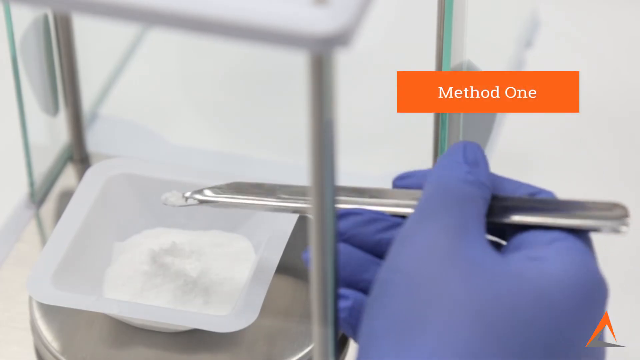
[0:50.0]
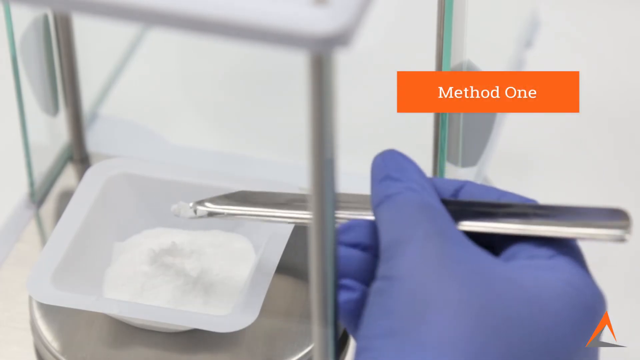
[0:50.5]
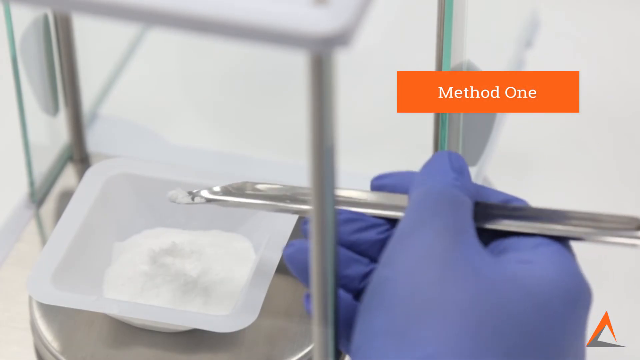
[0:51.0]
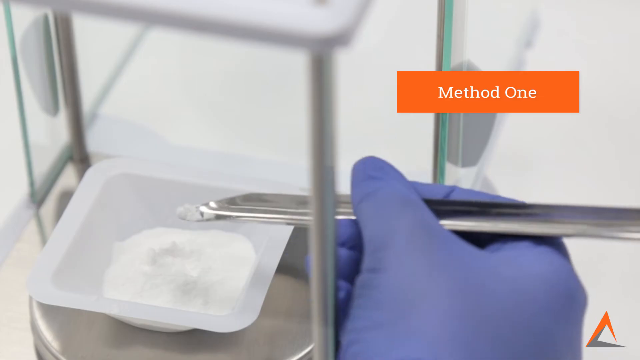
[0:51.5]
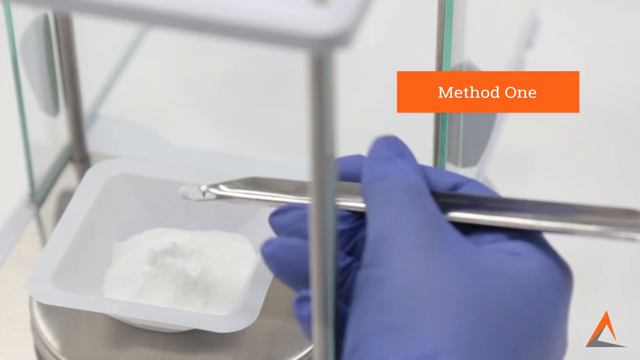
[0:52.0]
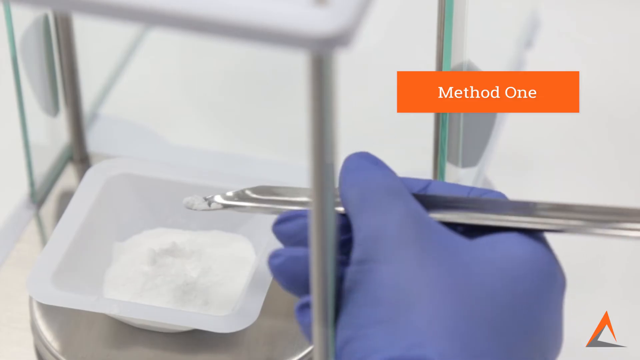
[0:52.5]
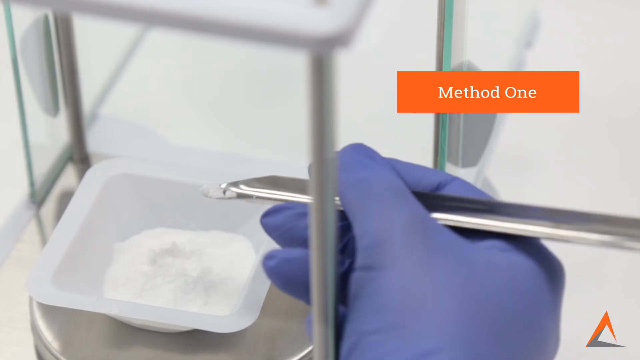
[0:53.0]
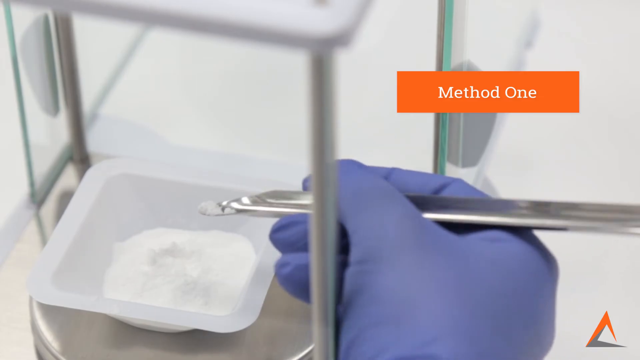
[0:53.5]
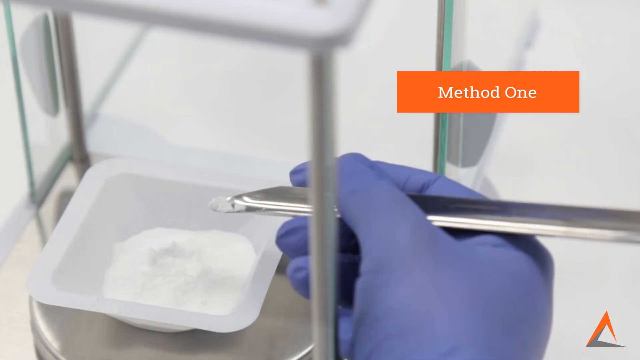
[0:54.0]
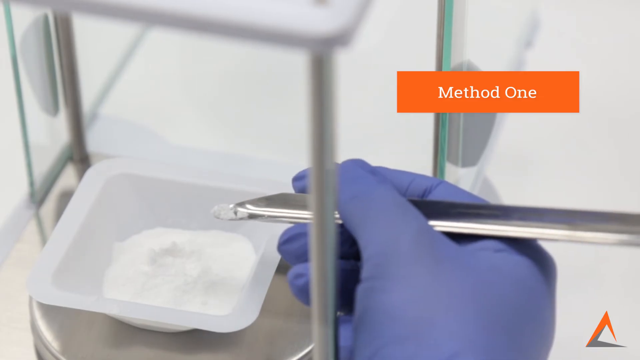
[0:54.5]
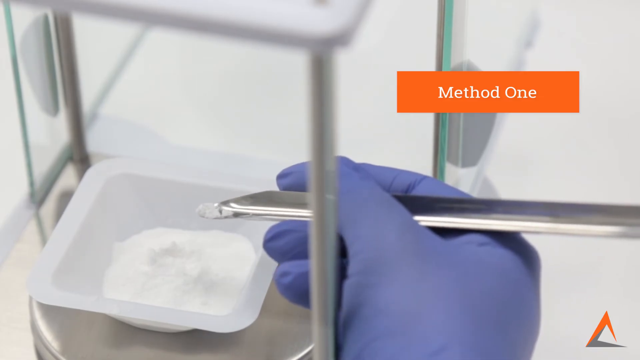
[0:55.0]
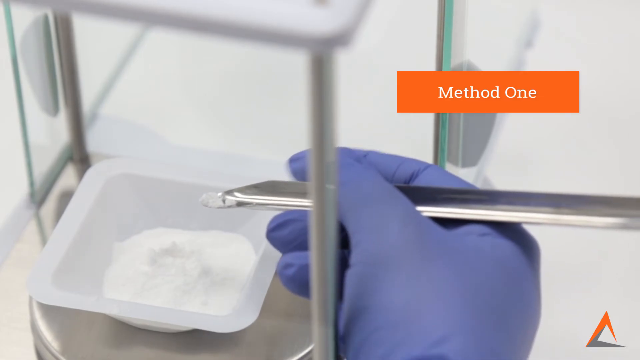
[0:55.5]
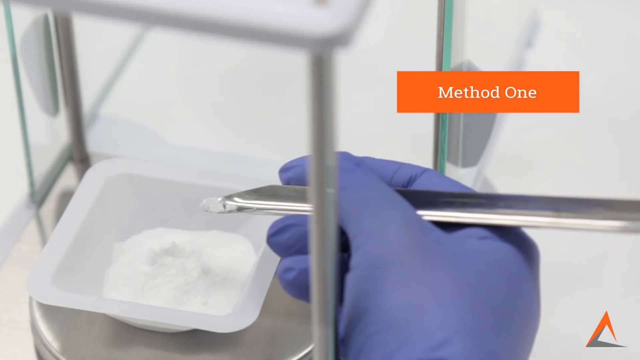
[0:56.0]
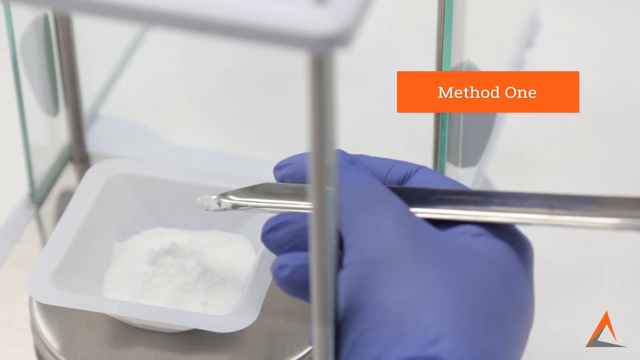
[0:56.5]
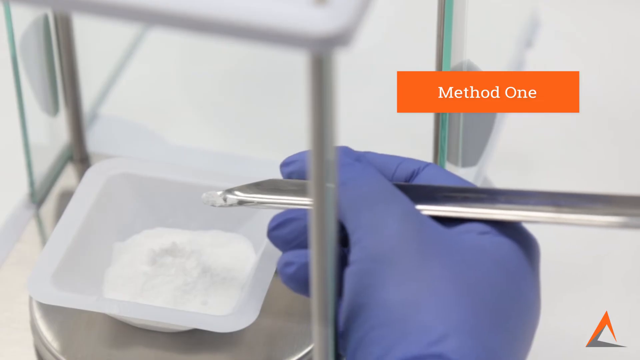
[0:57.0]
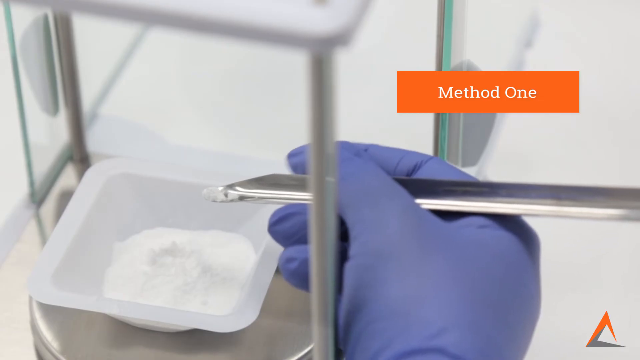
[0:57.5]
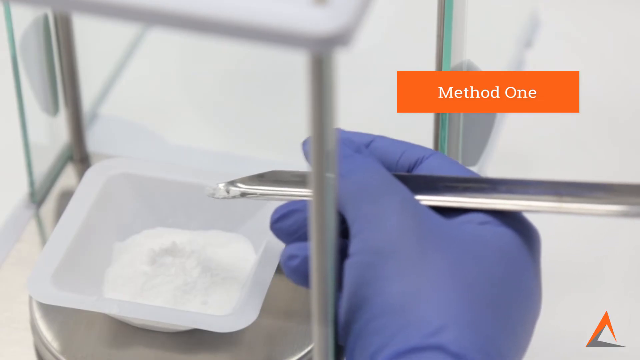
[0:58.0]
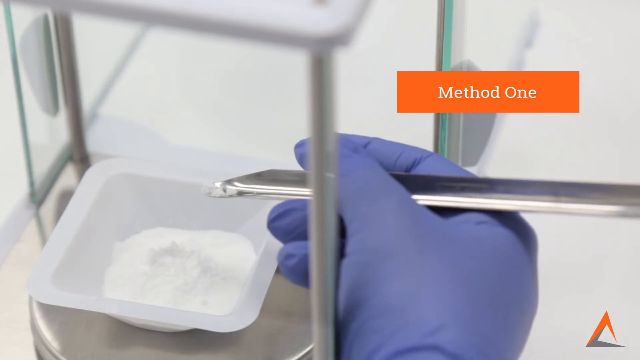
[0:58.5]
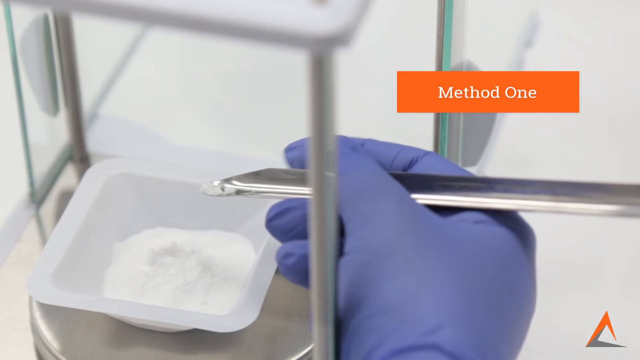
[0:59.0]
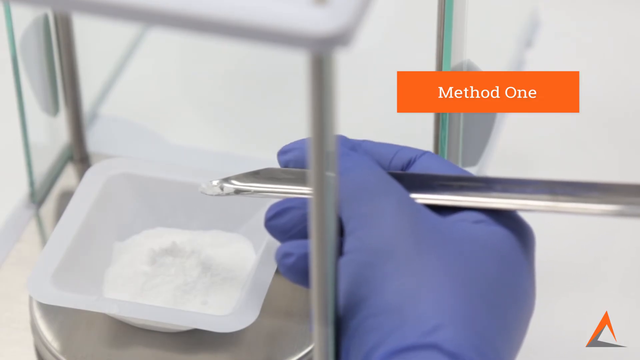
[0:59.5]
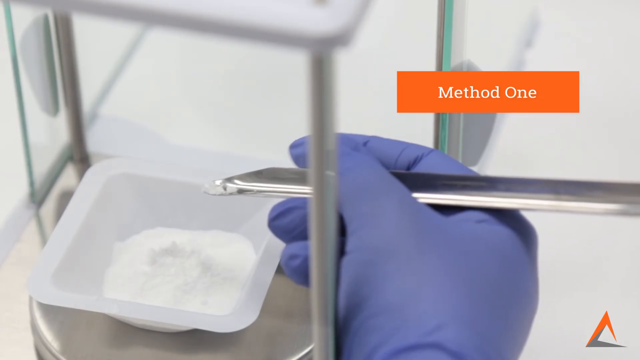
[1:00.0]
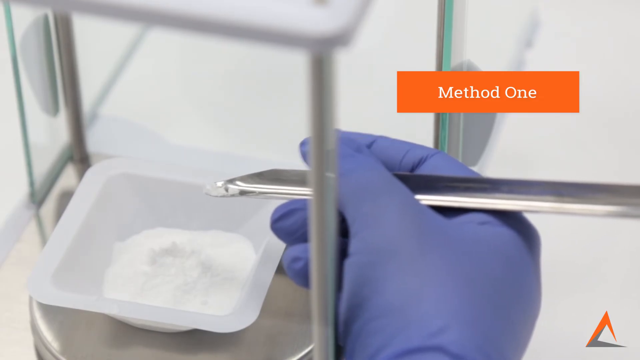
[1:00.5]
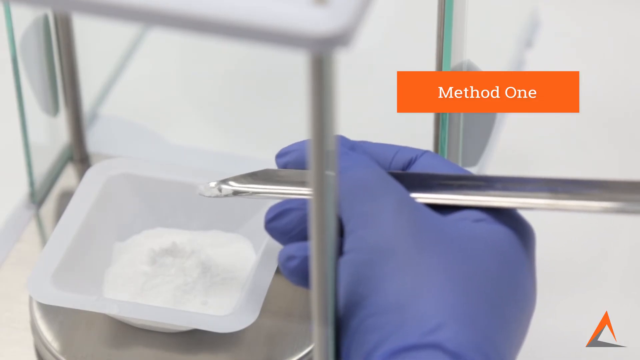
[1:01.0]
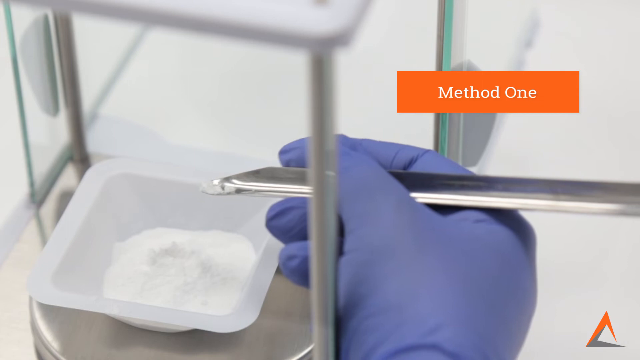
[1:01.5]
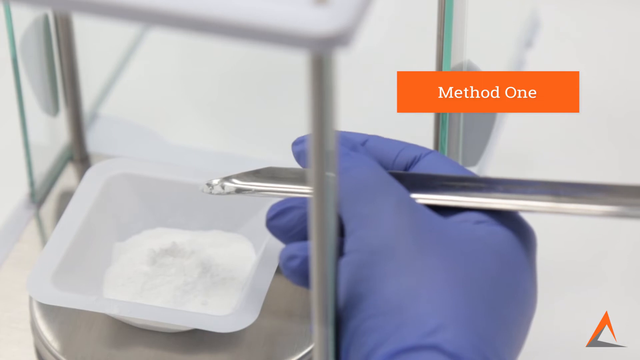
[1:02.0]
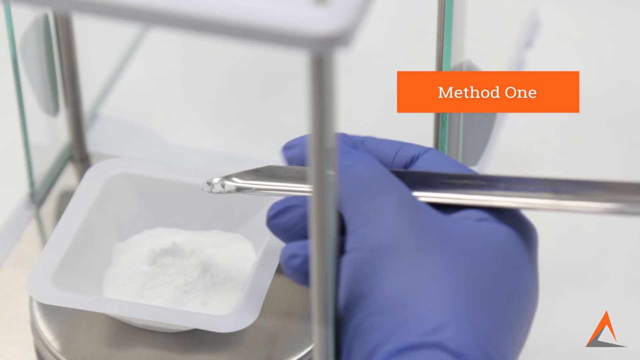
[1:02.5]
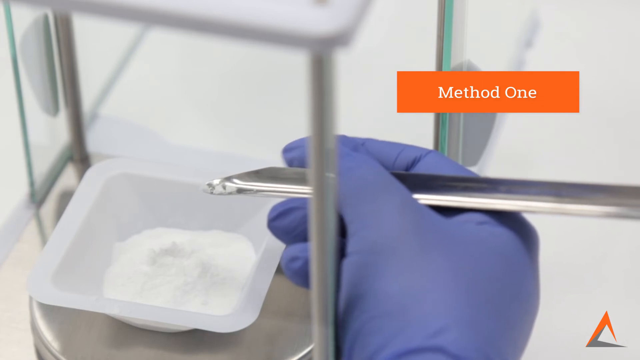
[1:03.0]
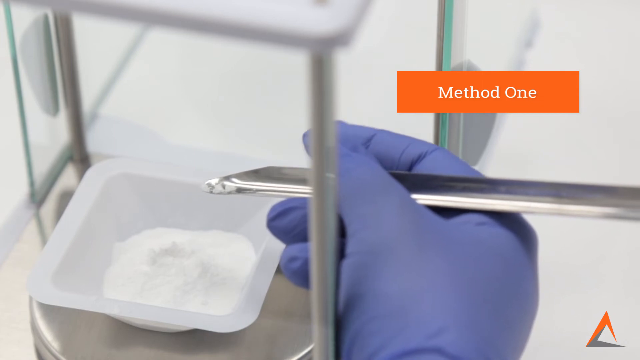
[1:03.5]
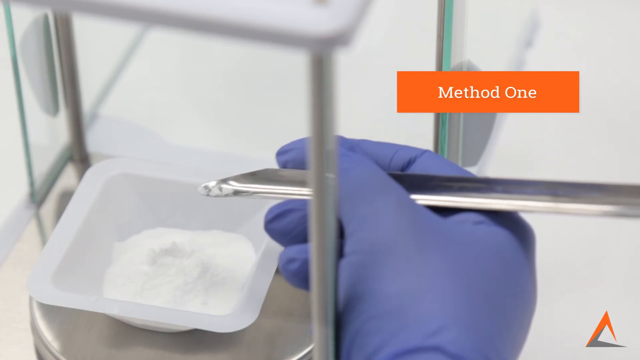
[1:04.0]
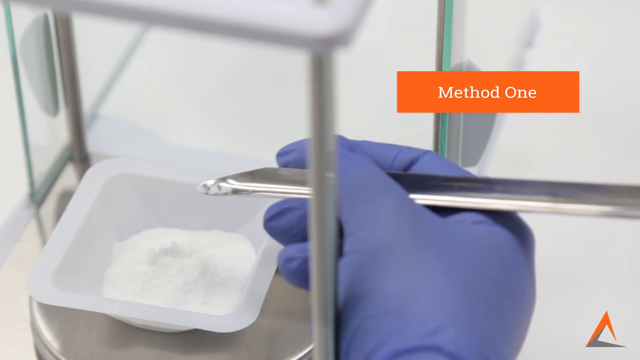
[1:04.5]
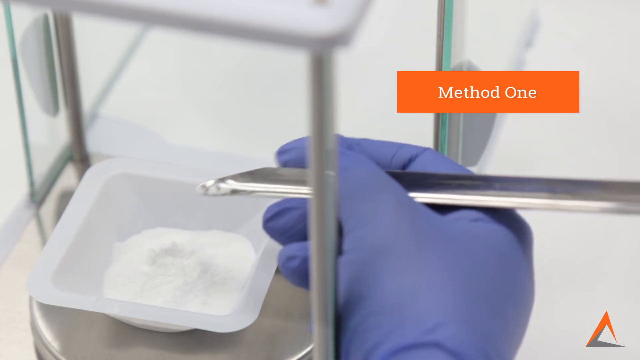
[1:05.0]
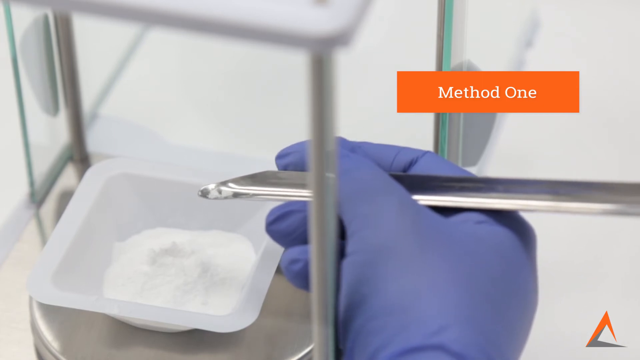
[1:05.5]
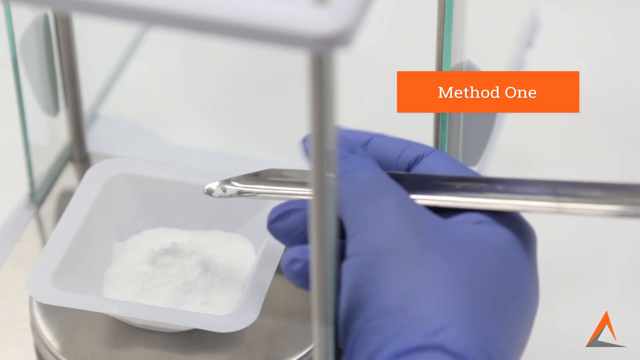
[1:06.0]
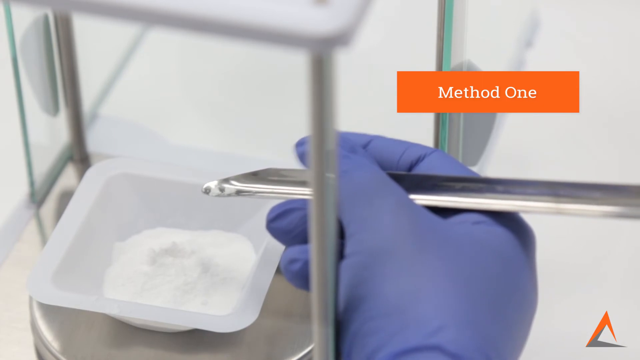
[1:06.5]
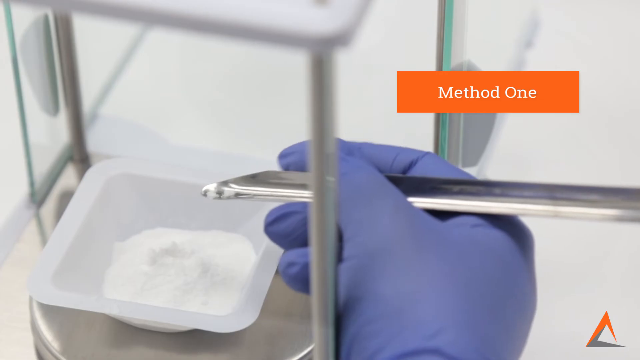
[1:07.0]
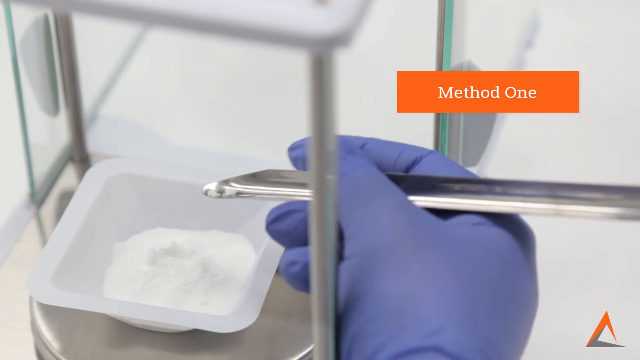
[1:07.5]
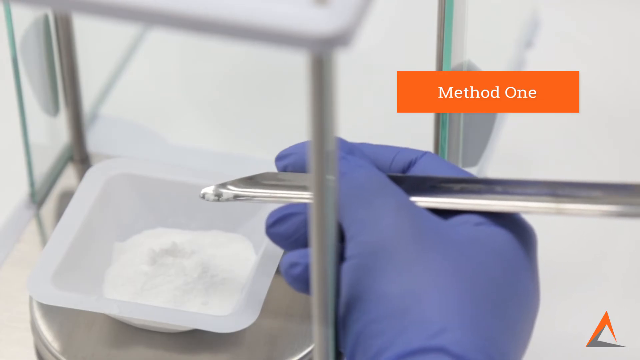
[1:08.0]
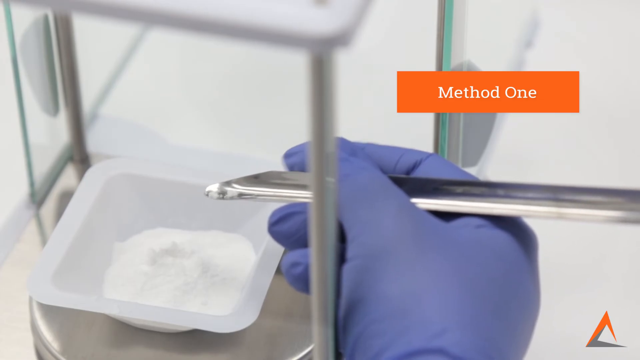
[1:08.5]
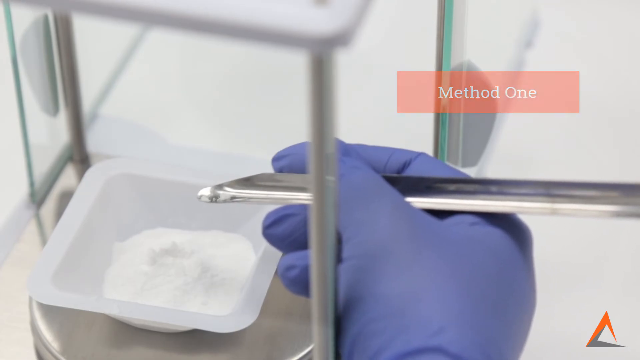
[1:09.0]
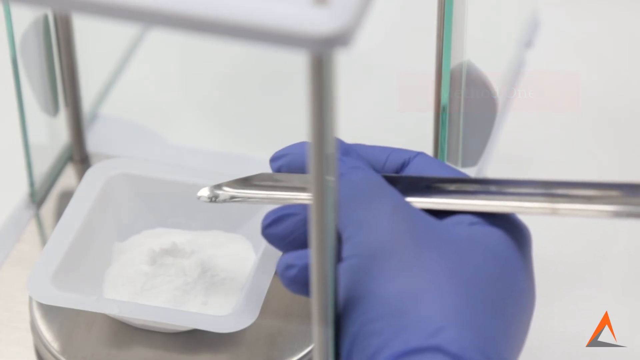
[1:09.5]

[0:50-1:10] A round, shiny metal platform is on the left side of the screen, with a small white plastic container on top of it whose bottom is filled with white powder. To the right, a right hand wearing a purple glove holds a shiny metallic tool over the container, with some powder on the tip. Above the hand, an orange rectangle reads "method one" in white. The person slowly moves the fingers of his right hand, moving the tool backwards until he is holding just the tip of it, then taps on it with his right finger, and some of the powder comes off the tip back into the white container.